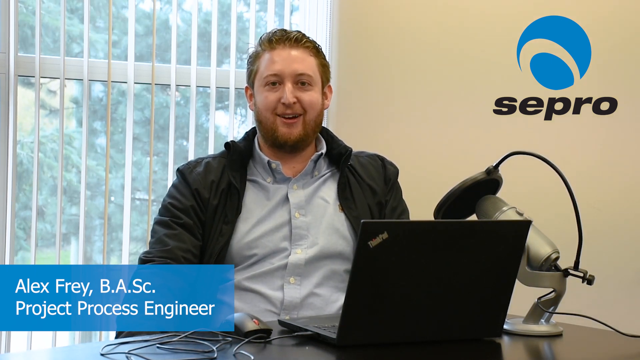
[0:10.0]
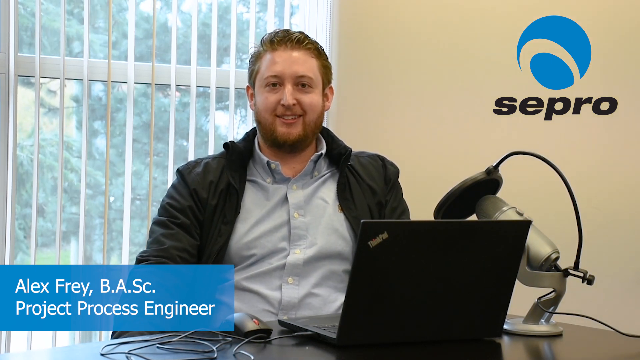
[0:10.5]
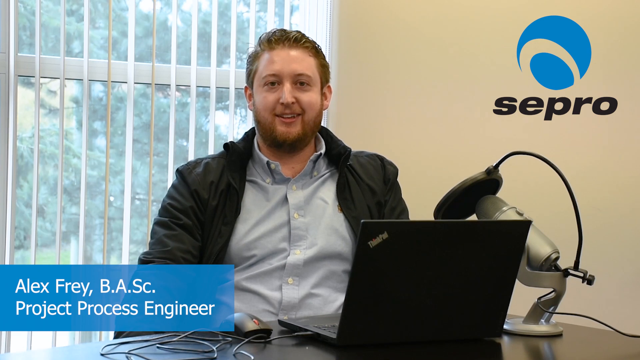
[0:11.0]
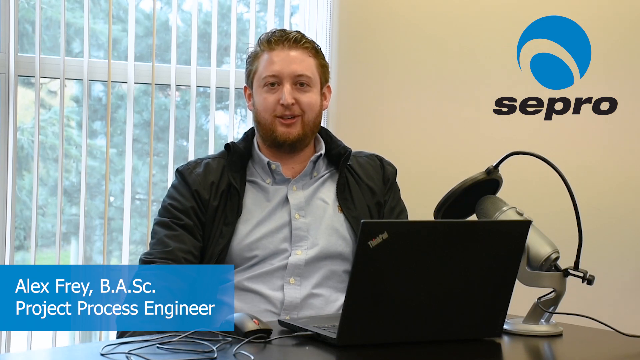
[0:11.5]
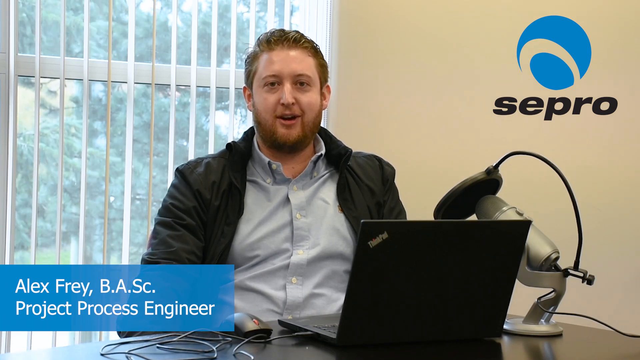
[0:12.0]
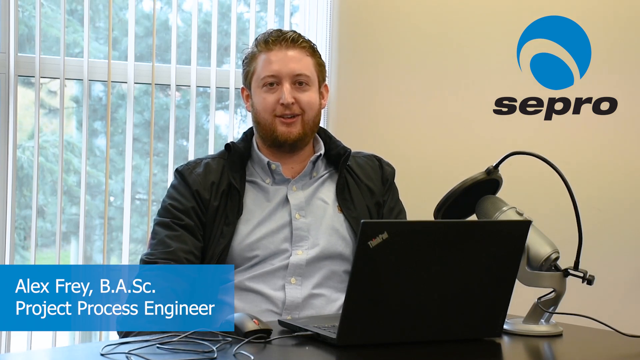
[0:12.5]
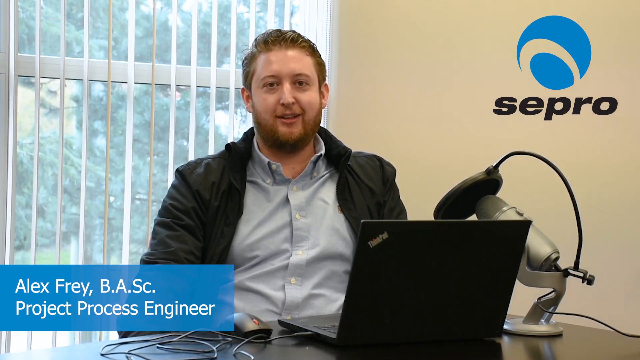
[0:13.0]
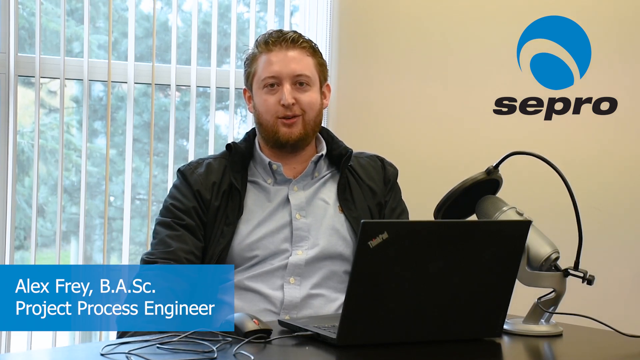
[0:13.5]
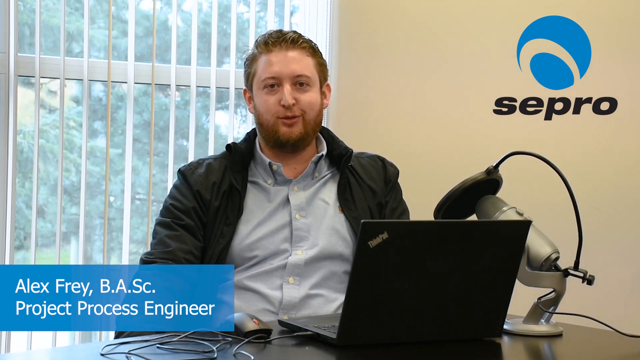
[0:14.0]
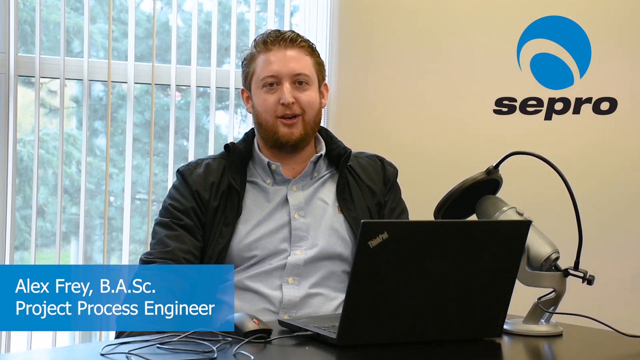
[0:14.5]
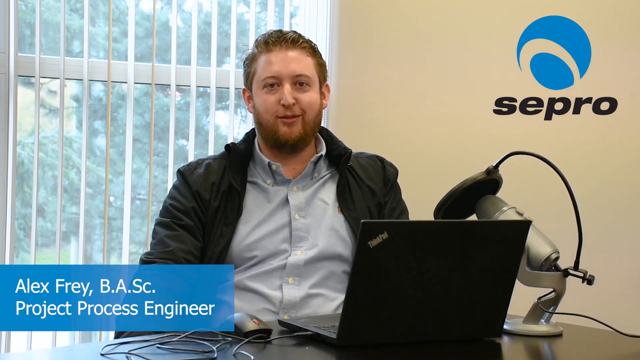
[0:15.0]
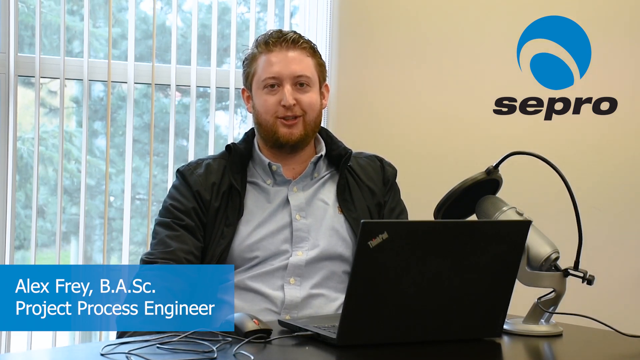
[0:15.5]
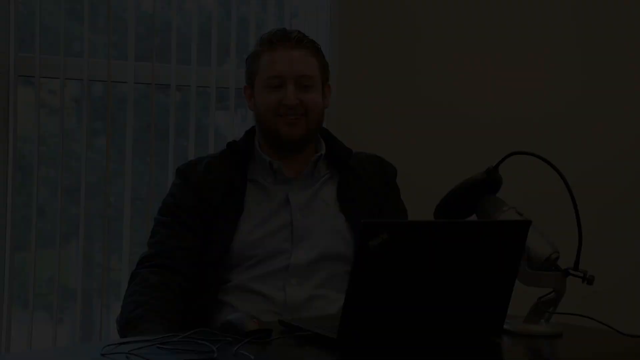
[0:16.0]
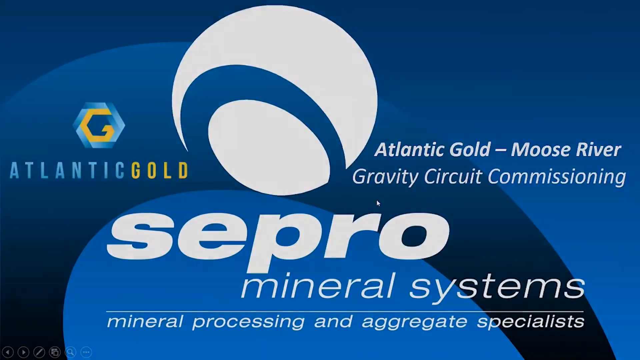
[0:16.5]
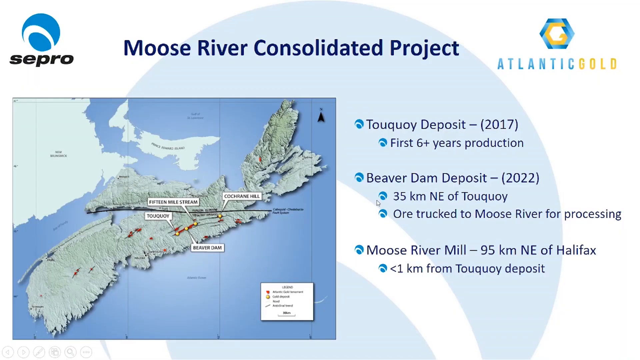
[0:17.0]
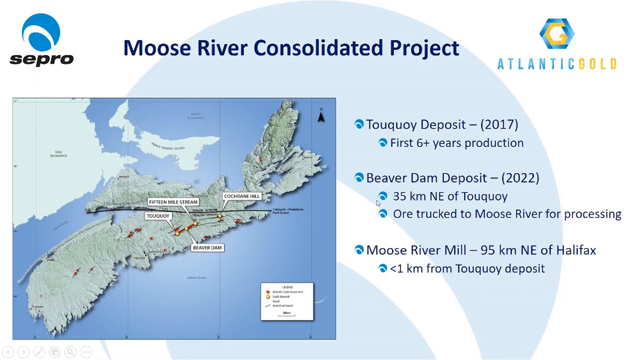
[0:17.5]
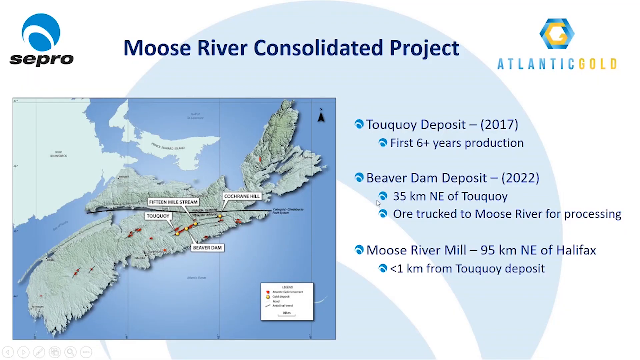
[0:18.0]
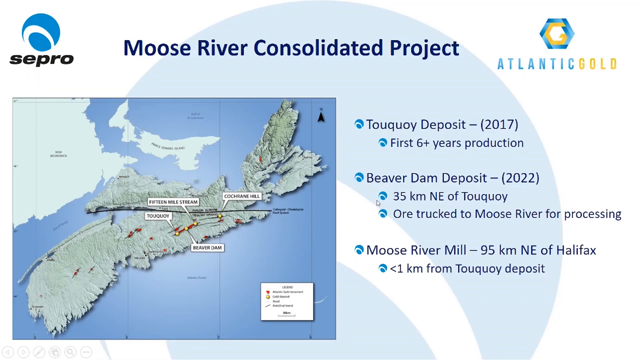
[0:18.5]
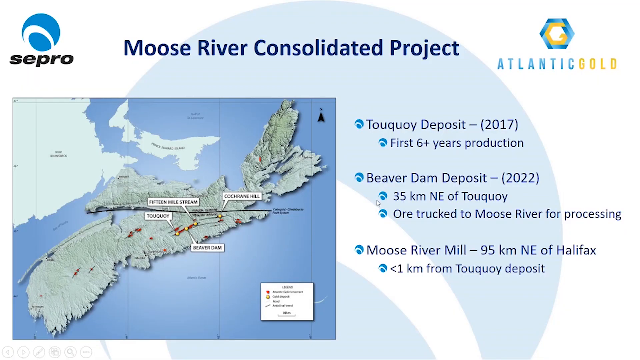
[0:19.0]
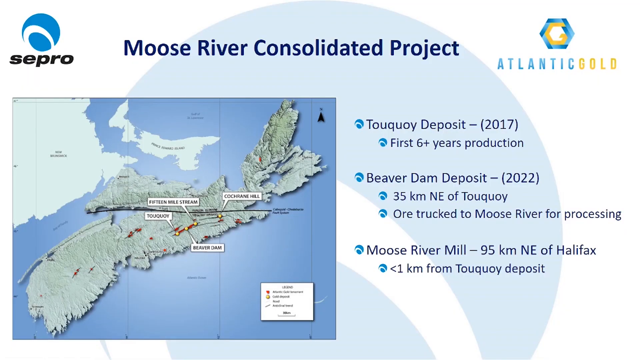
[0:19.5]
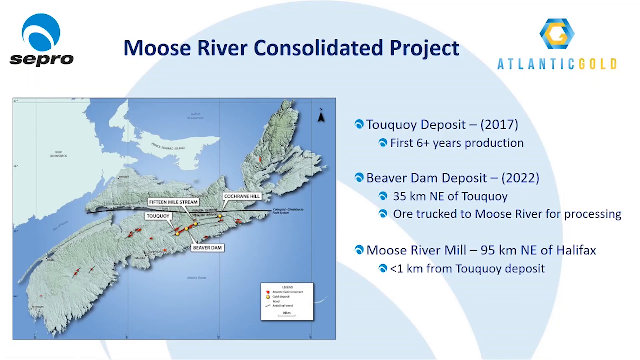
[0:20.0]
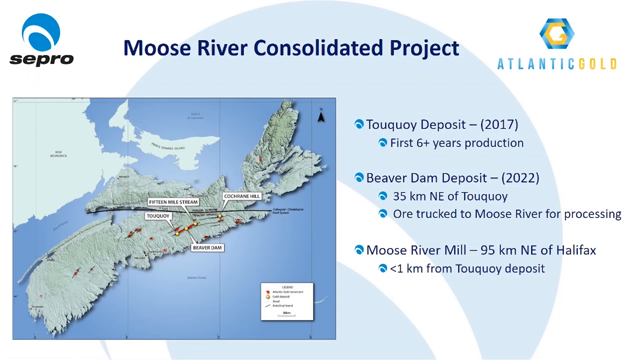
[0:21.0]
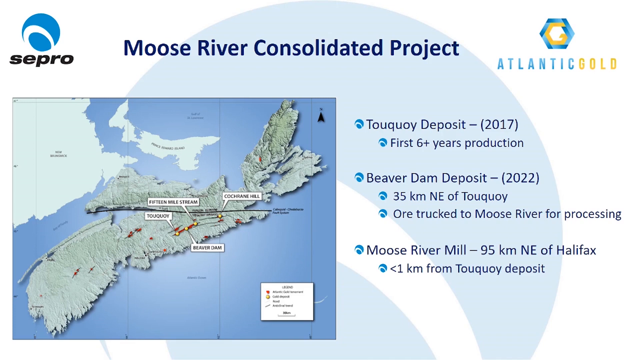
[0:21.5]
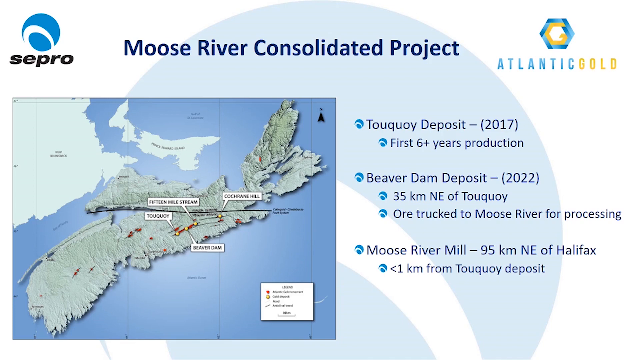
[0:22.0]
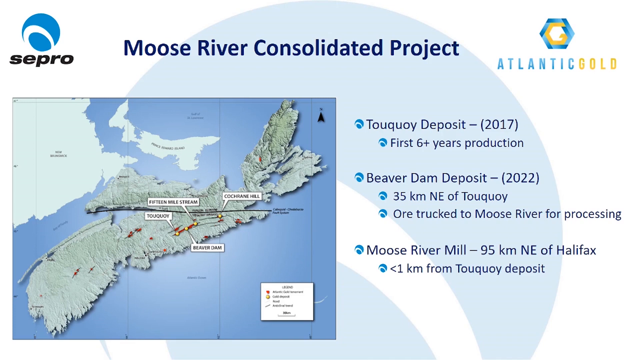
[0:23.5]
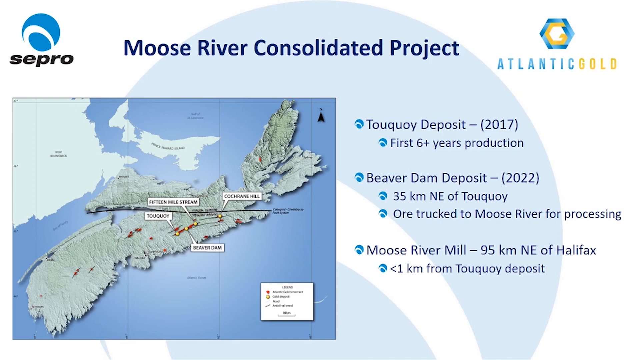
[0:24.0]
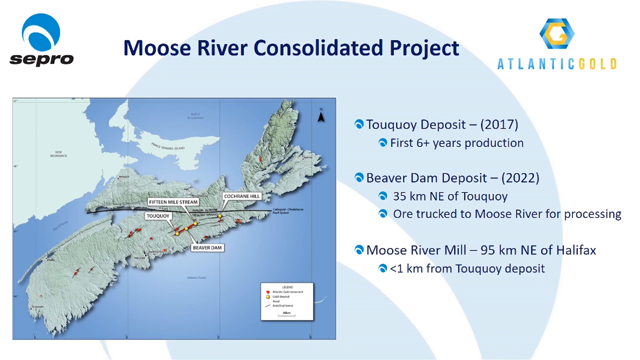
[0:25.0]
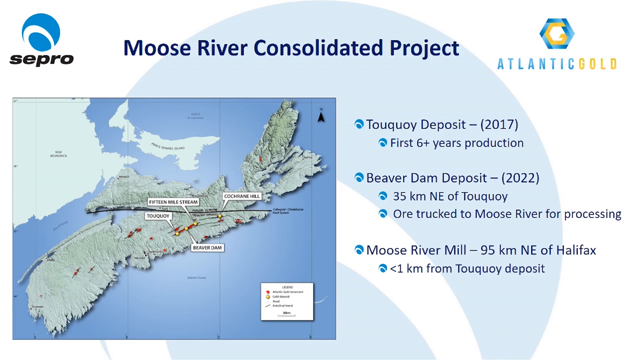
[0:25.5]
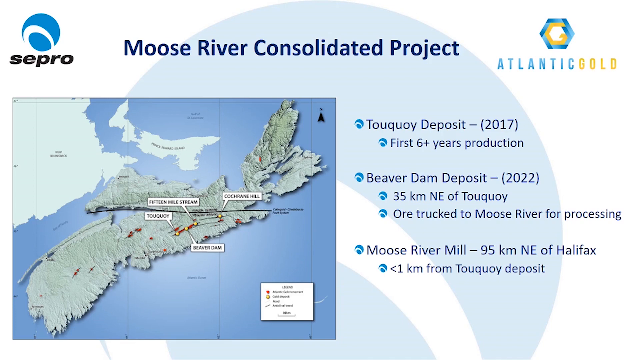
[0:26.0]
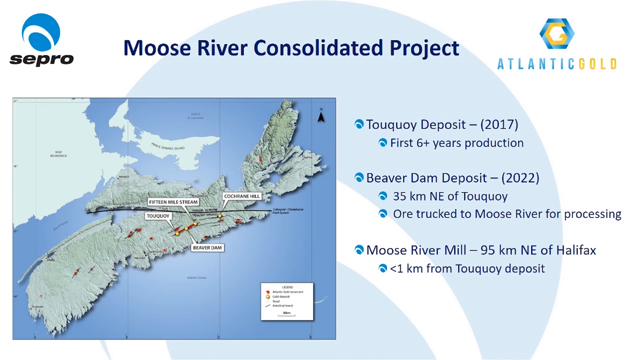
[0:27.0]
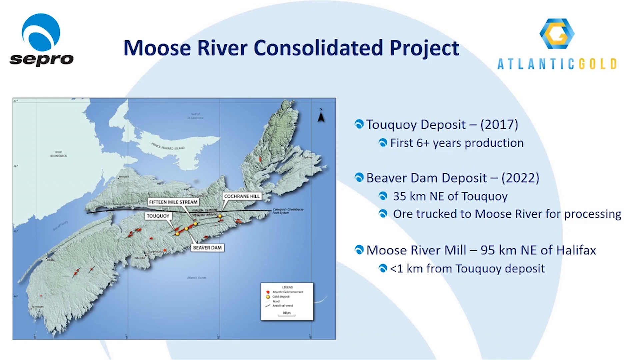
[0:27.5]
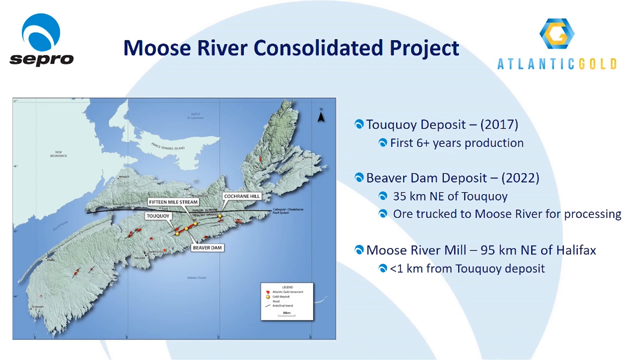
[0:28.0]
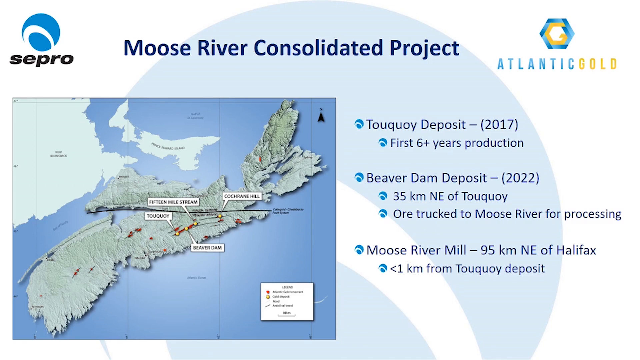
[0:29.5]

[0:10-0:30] A man sits at a desk talking, with a computer, a laptop, in front of him and a microphone. Next comes a page for Sepro Mineral Systems: an Atlantic Gold logo is on the left side, and on the right side is the text "Atlantic Gold Moose River Gravity Circuit Commissioning," with "Mineral Processing and Aggregate Specialist" below it. The next page shows an image of a map of an area with some bulleted items. The Sepro logo is at the top left, "Moose River Consolidated Project" is in the center, and Atlantic Gold and its logo are at the top right. The map takes up most of the left side of the page, with four different areas highlighted. On the right side are the texts "Touquoy Deposit 2017," "First six years production," then below that "Beaver Dam Deposit 2022," "35KM NE of Touquoy or truck to Moose River for processing," "Moose River Mill 95 km NE of Halifax," and below that "less than one kilometer for Touquoy Deposit."